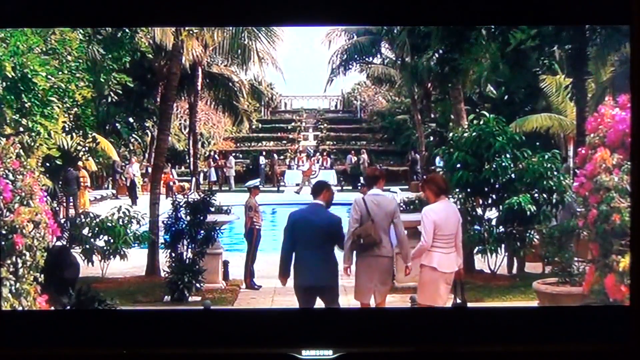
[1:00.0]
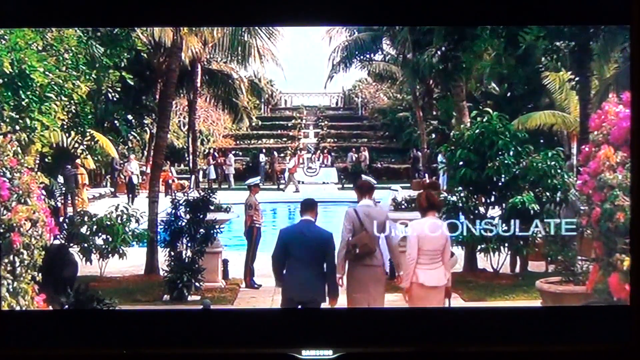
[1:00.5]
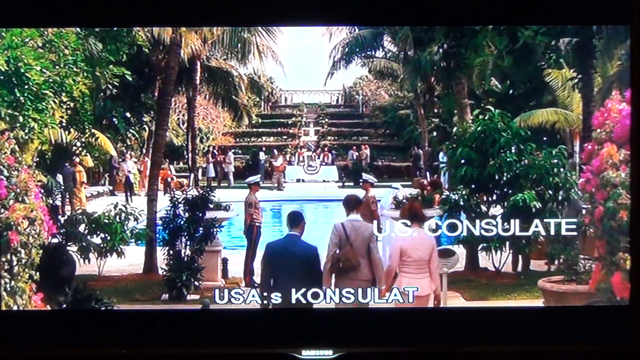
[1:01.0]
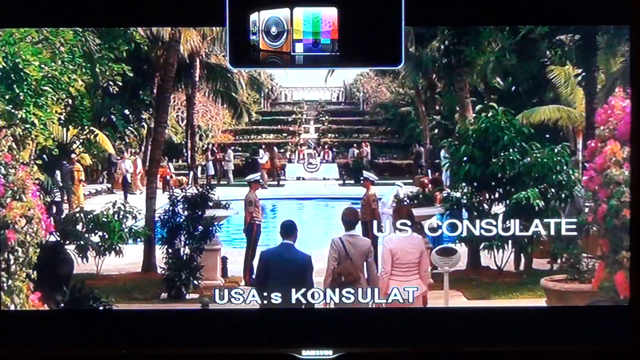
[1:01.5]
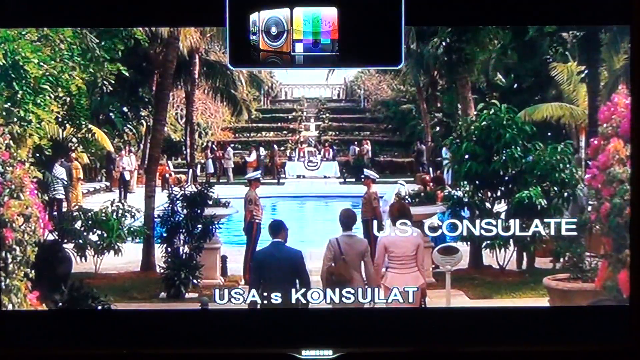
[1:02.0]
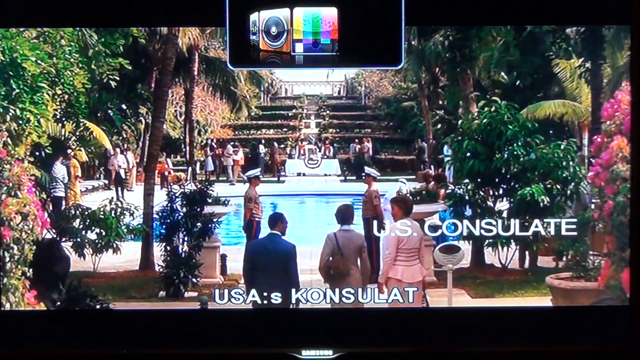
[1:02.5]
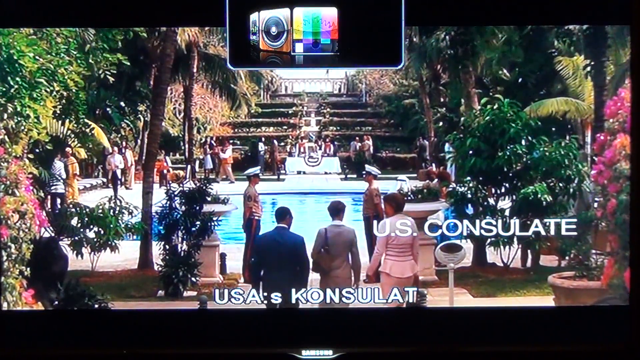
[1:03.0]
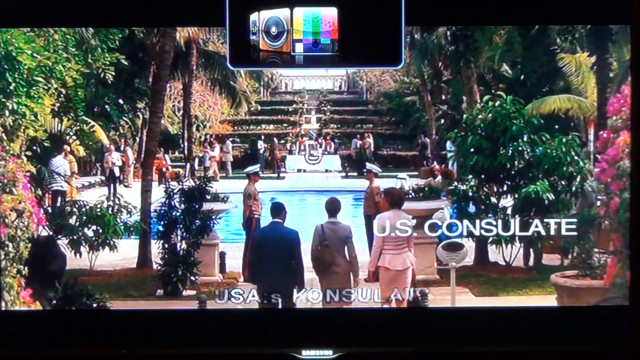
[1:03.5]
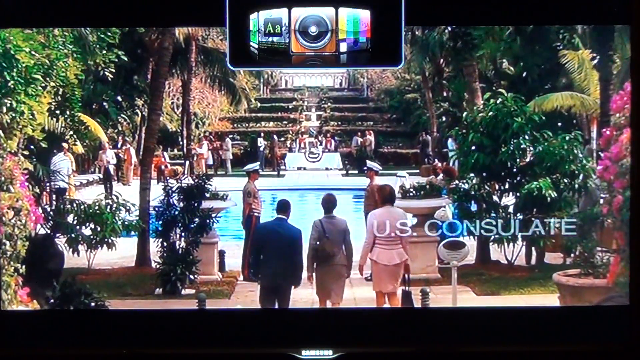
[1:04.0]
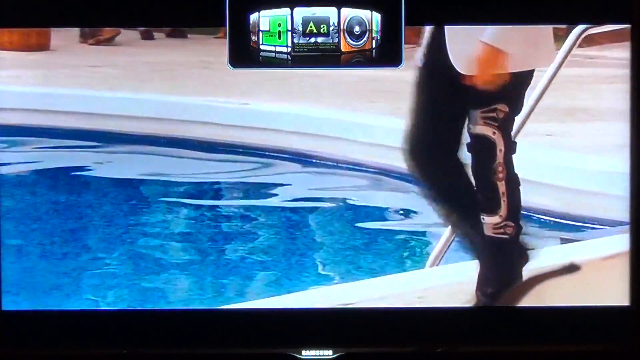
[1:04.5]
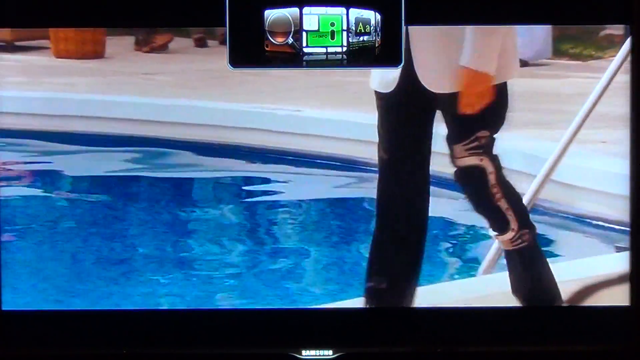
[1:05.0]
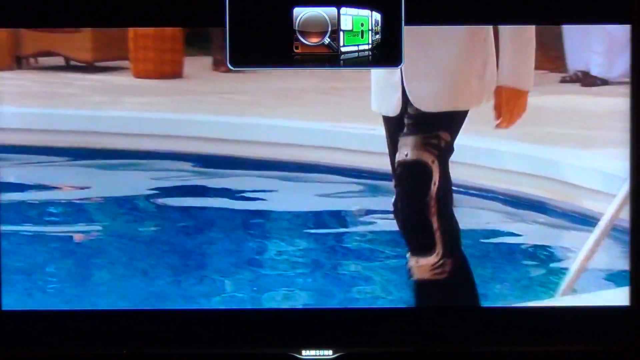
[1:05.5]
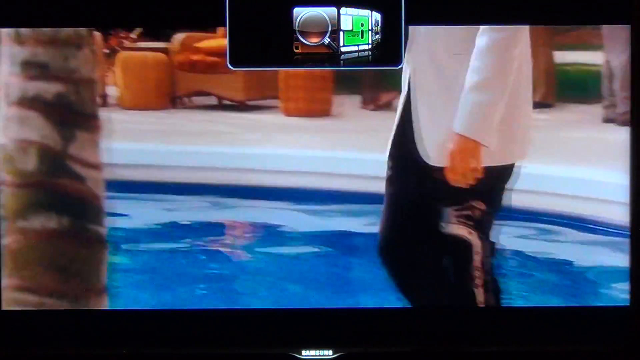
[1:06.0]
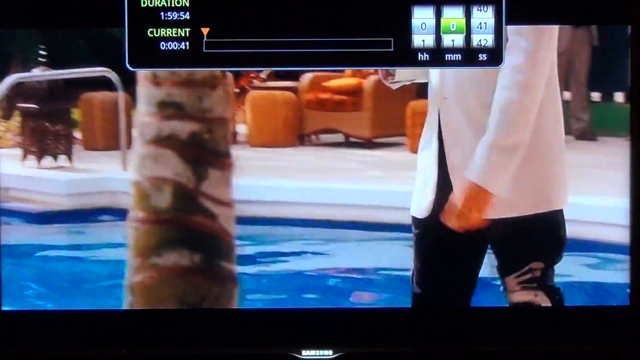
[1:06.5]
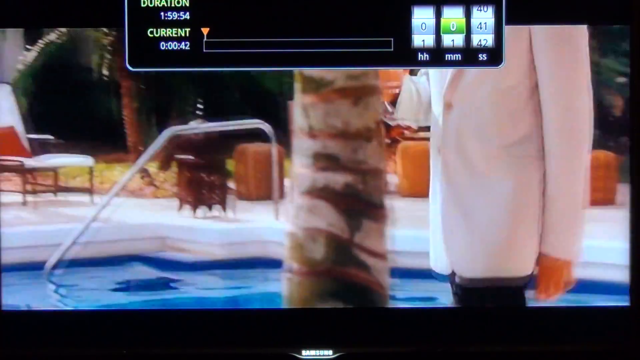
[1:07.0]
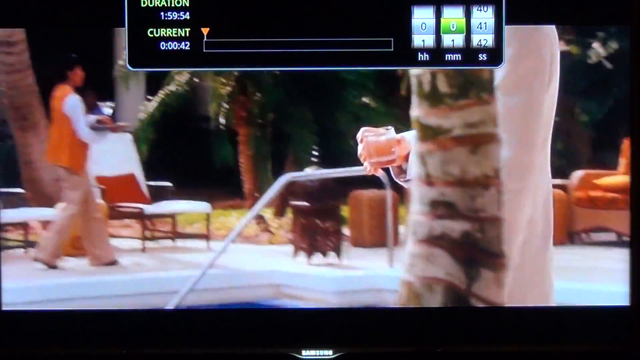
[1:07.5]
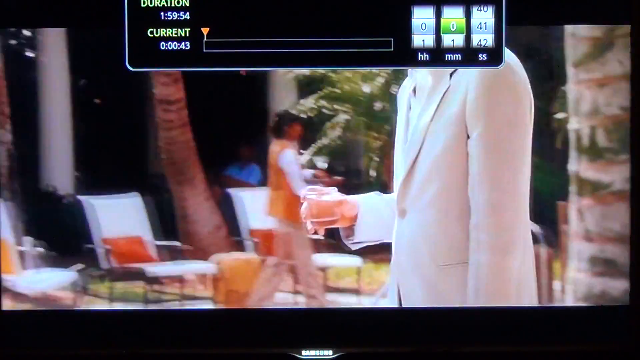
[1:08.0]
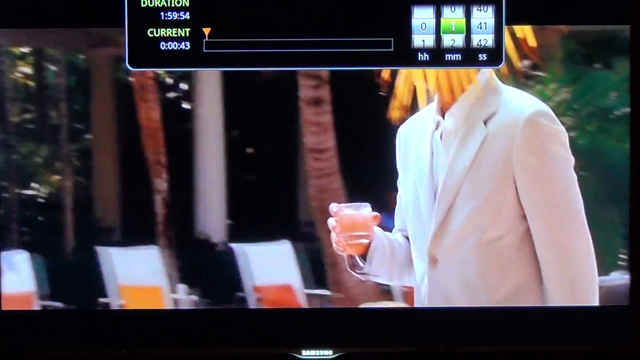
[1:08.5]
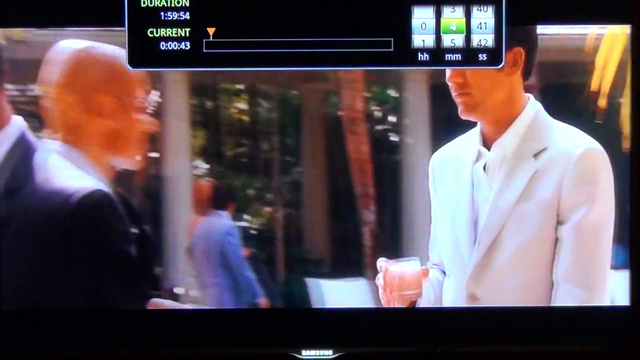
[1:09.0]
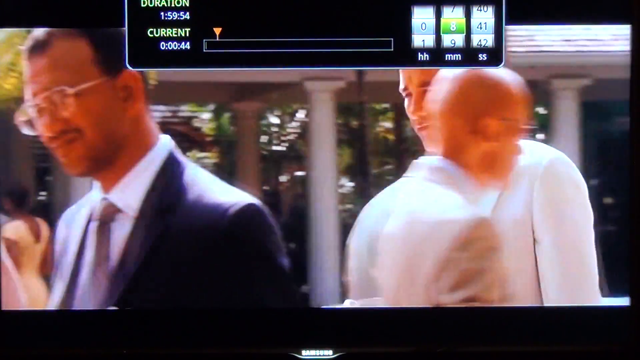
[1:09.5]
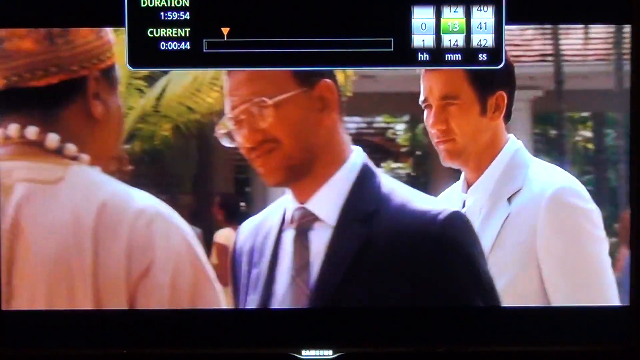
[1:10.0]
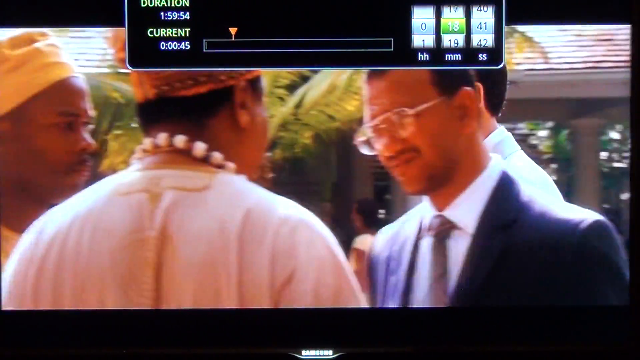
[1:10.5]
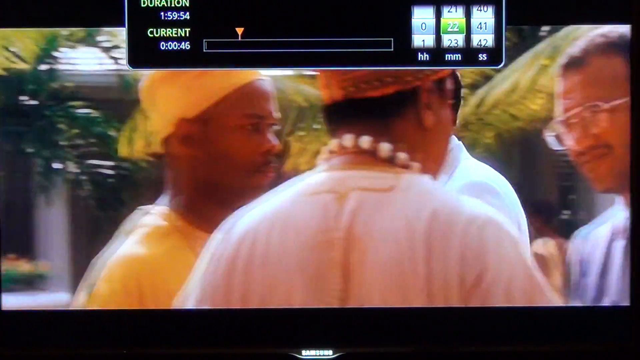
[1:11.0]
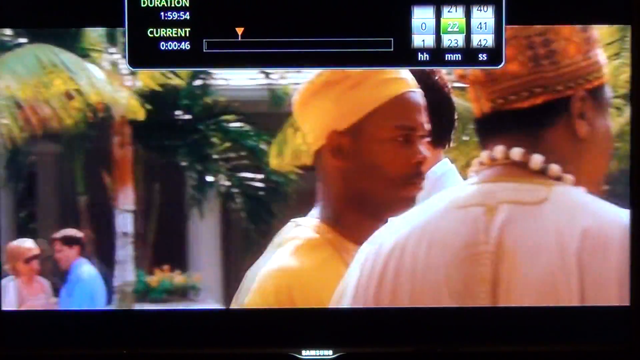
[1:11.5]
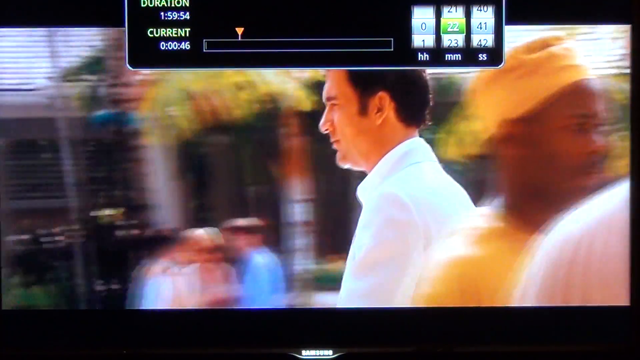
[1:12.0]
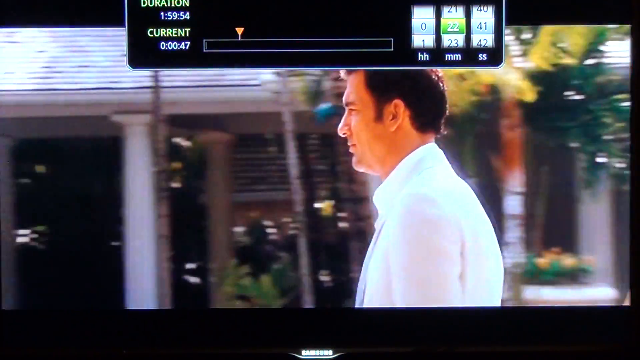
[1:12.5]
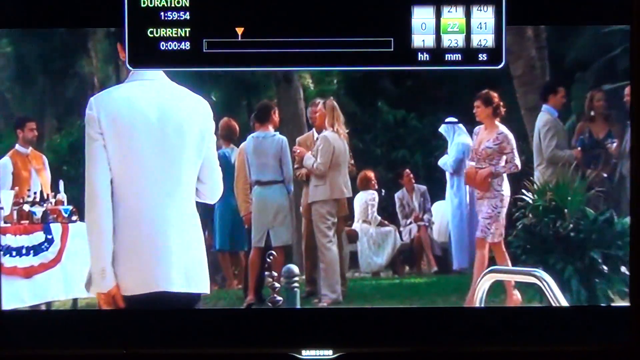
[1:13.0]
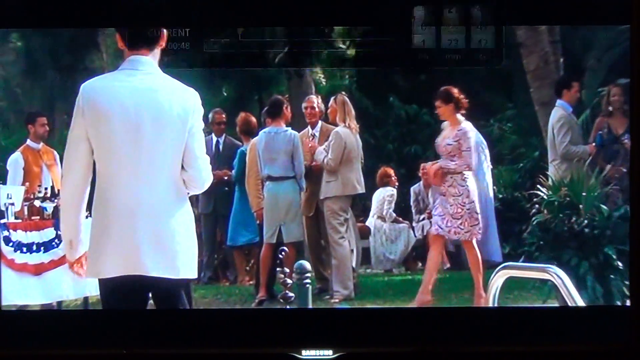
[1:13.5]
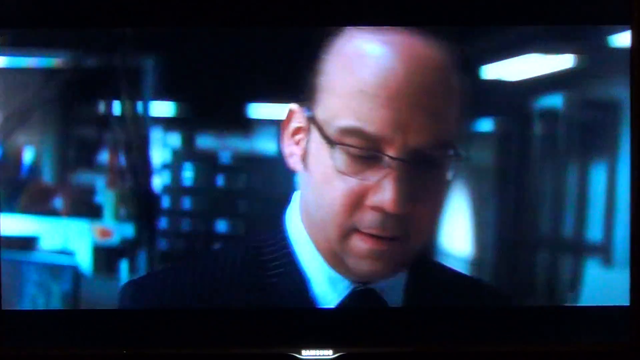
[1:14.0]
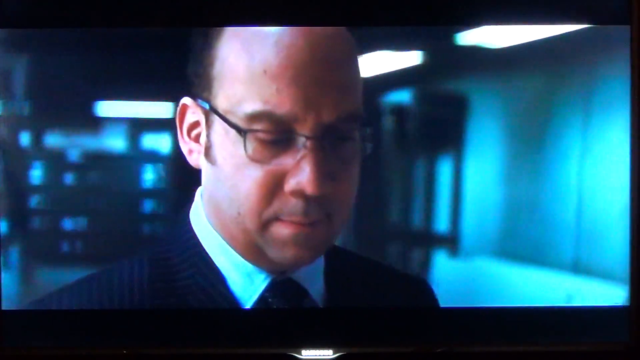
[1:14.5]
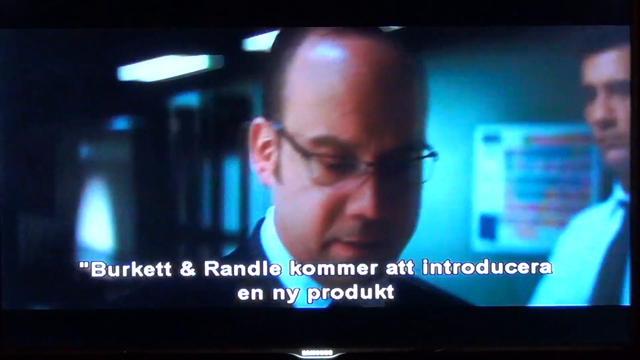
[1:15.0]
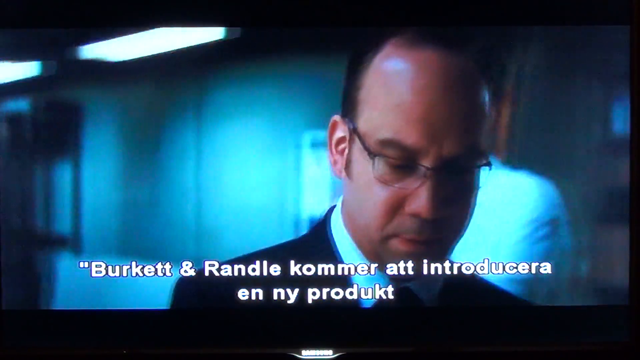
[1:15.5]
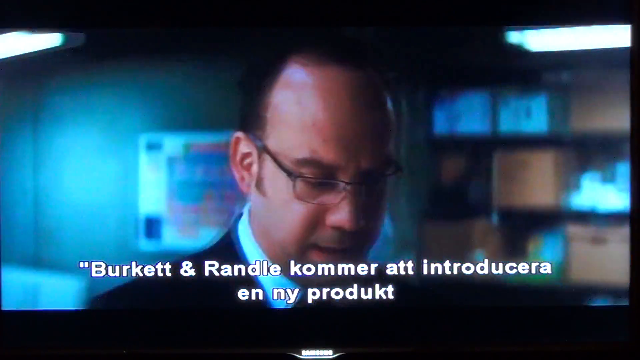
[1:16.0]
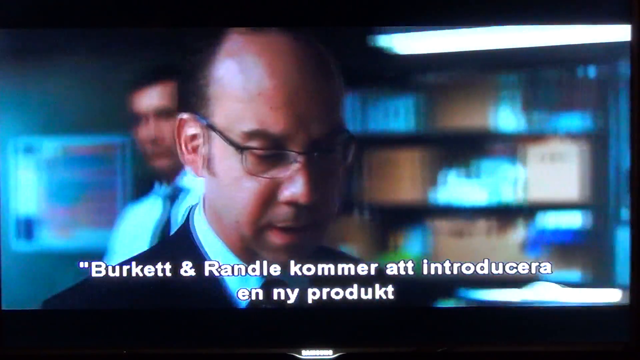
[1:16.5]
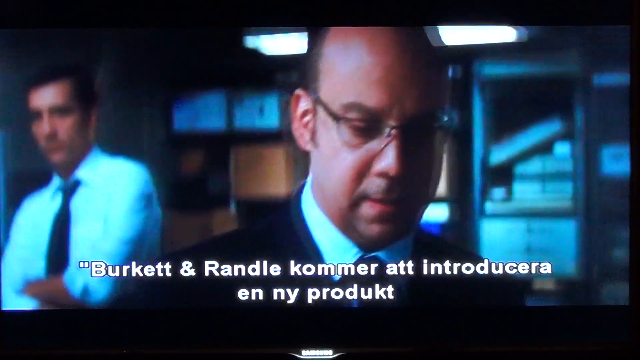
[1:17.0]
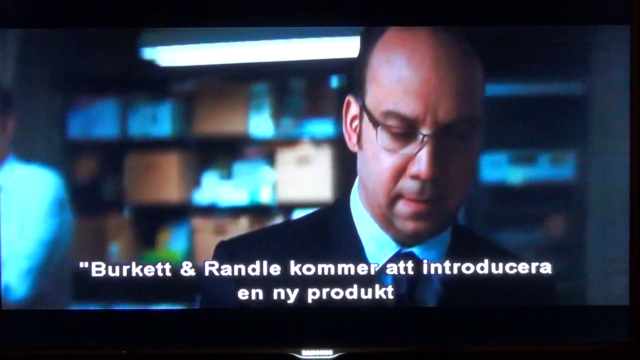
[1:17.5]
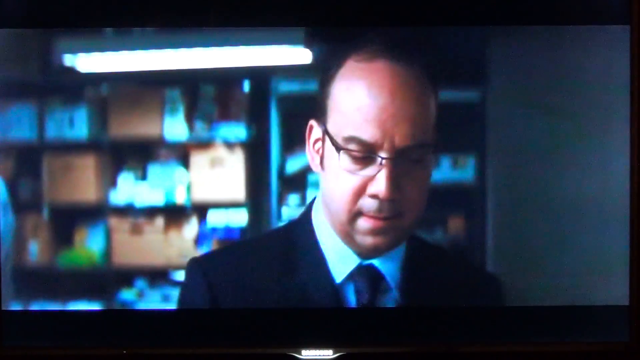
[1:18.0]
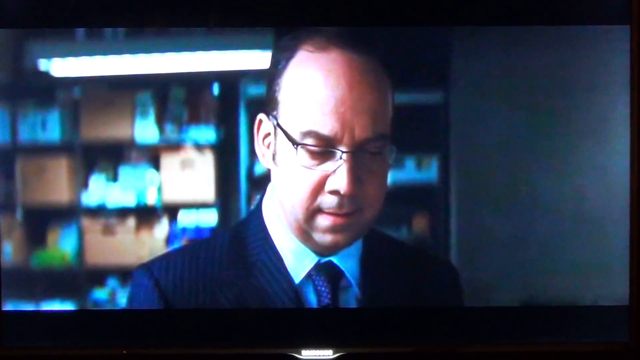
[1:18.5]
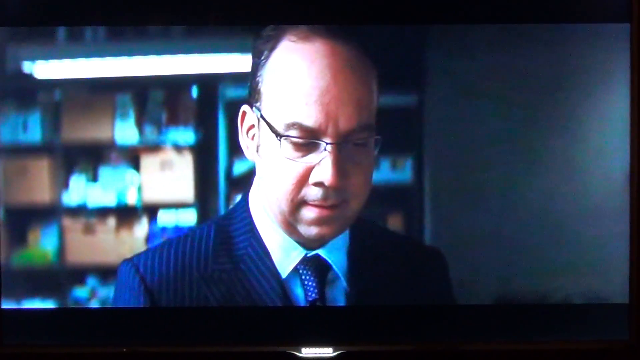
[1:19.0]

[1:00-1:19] An image of the US consulate in Dubai is shown. The consulate looks very beautiful, with lots of flowers, people hanging out around the swimming pool, and some military members standing guard. Antonio Bandras, very young, walks around the swimming pool in a white suit, holding a drink, with some sort of medical instrument on his knee, maybe a cast. He goes past three people talking; he is seen from the back, and a lady comes out from the other side of the pool. The user then uses the menus to jump forward in the film, which appears to be nearly two hours long, to around the 22-minute 41-second mark, where a bald man in an office is talking about something with a stick.